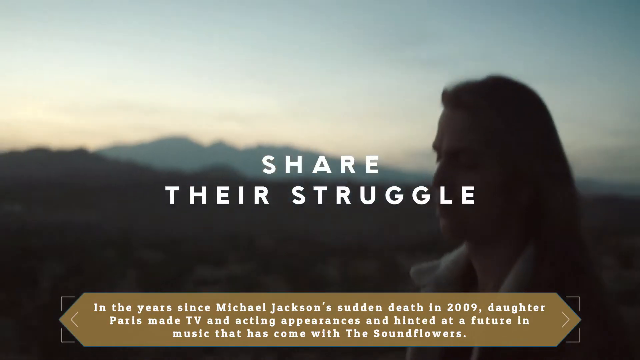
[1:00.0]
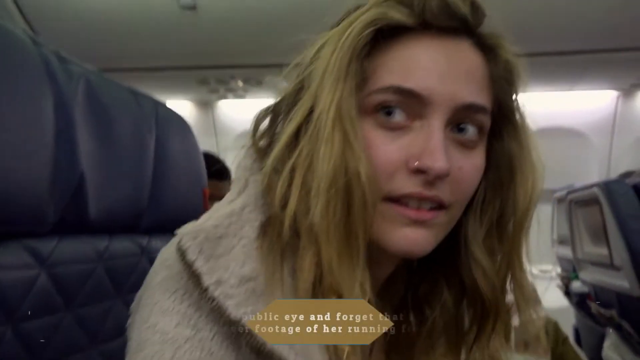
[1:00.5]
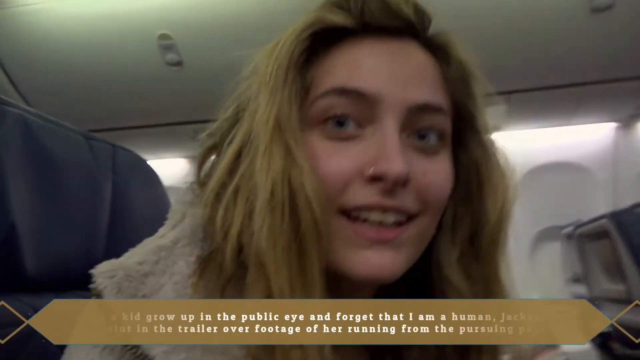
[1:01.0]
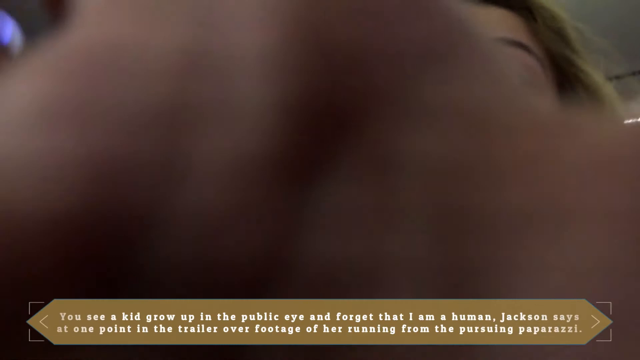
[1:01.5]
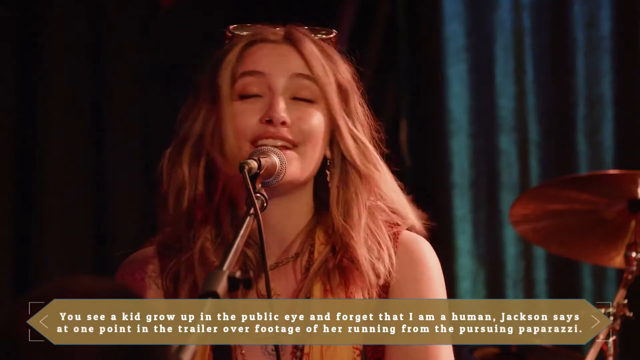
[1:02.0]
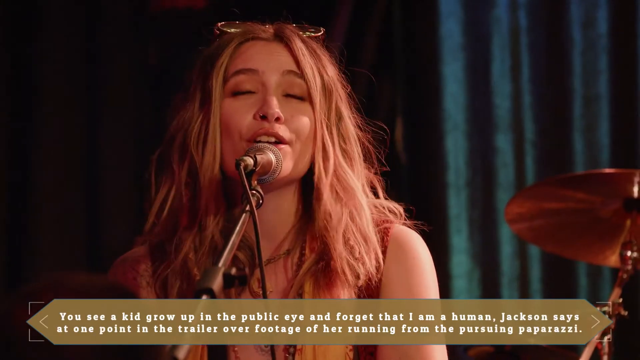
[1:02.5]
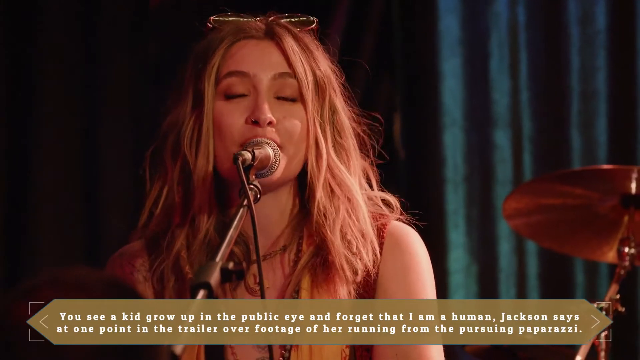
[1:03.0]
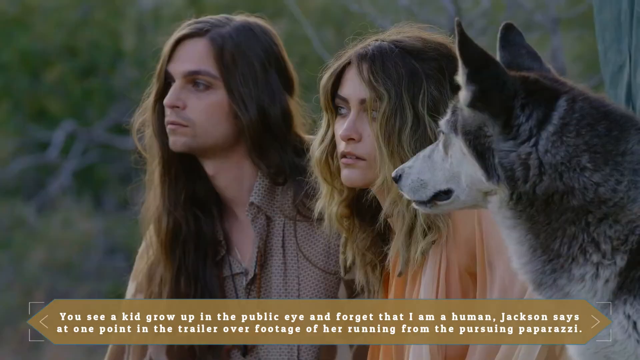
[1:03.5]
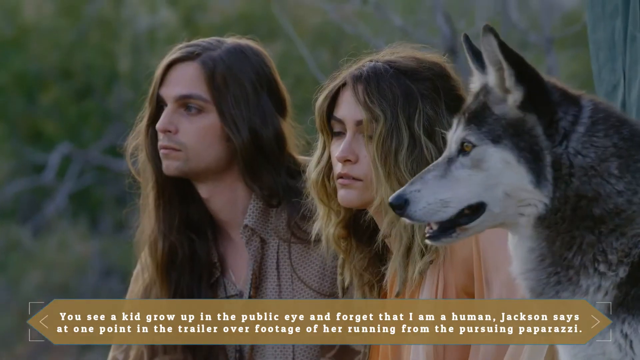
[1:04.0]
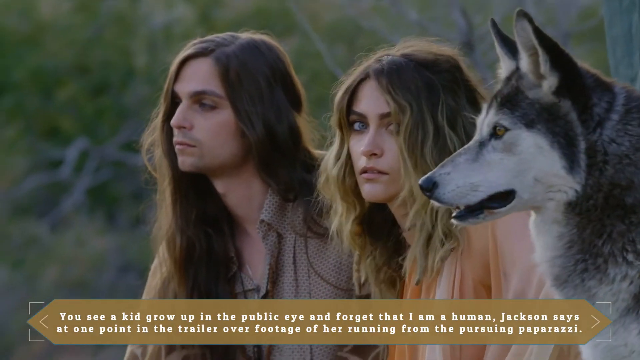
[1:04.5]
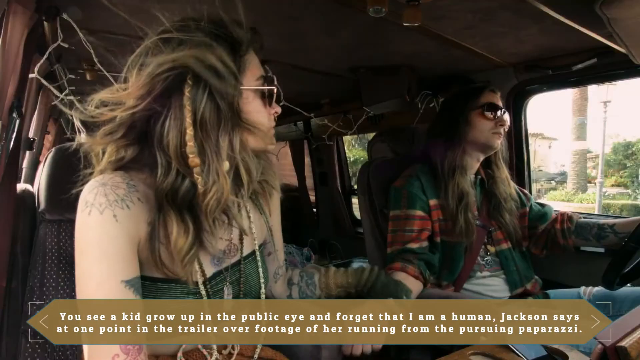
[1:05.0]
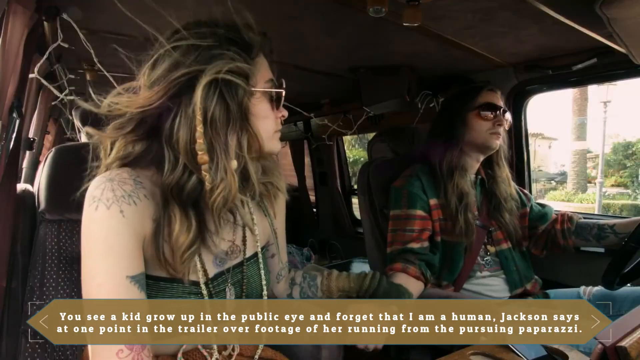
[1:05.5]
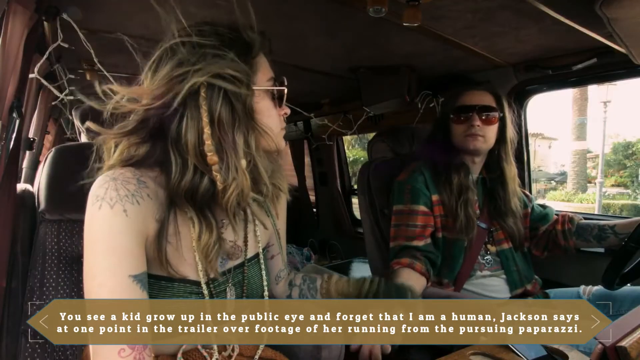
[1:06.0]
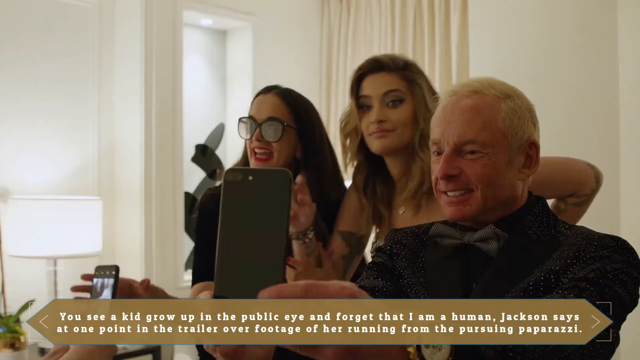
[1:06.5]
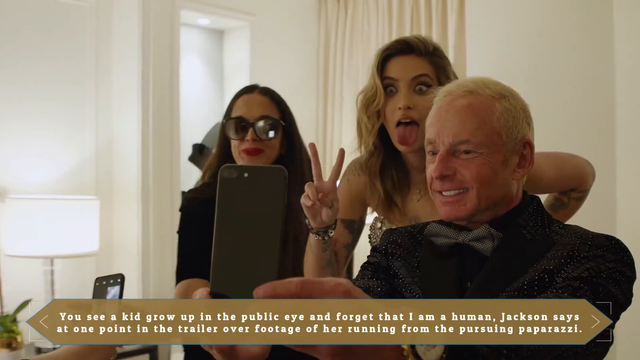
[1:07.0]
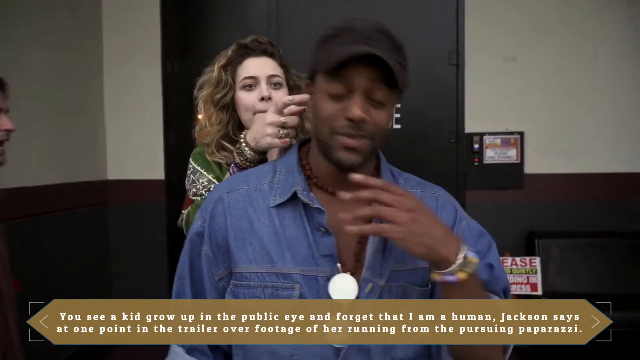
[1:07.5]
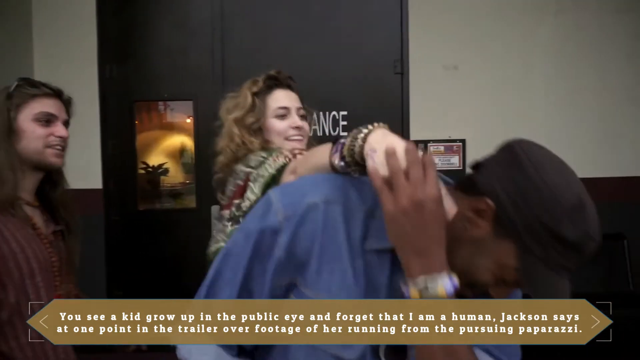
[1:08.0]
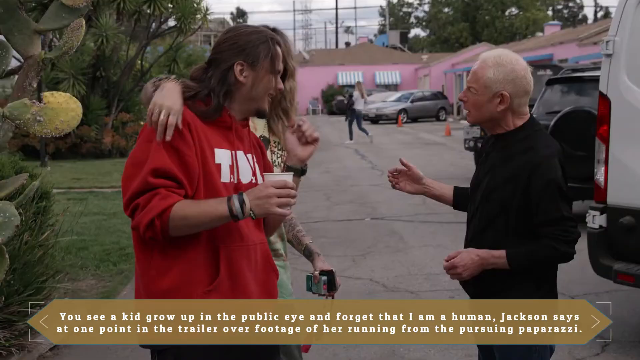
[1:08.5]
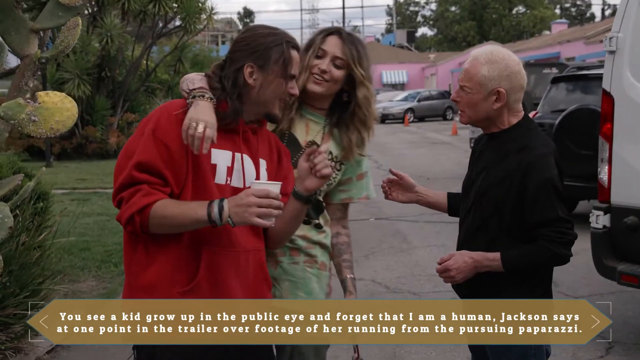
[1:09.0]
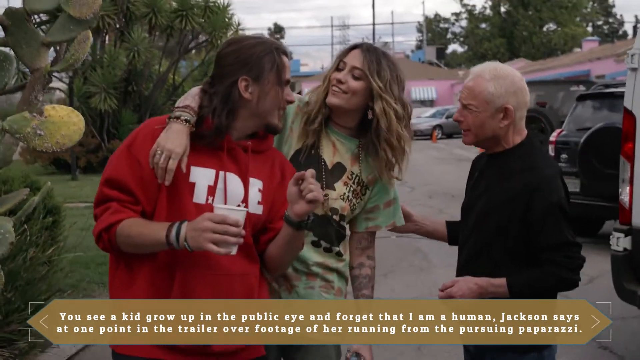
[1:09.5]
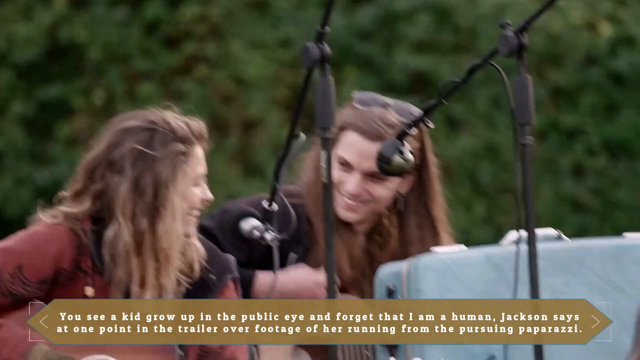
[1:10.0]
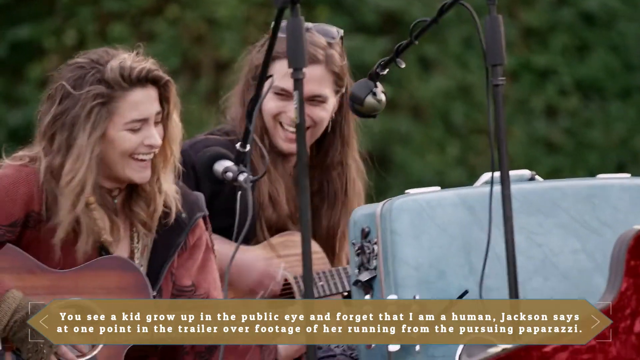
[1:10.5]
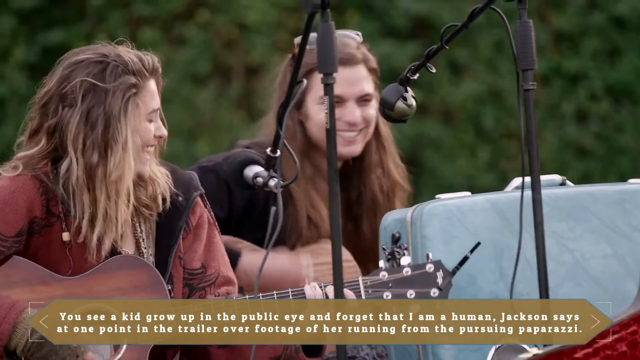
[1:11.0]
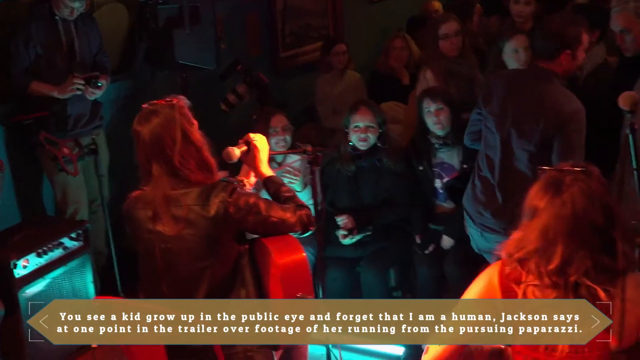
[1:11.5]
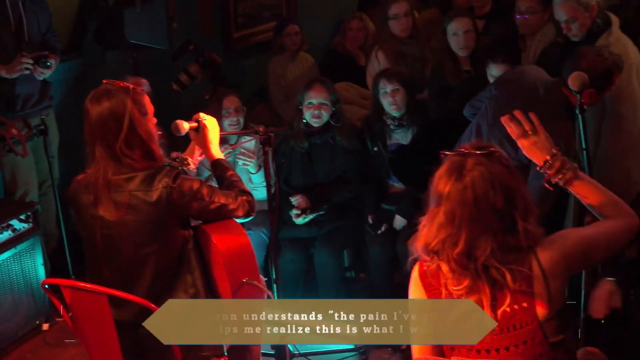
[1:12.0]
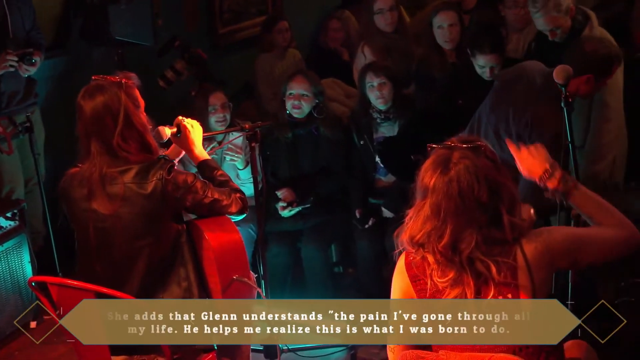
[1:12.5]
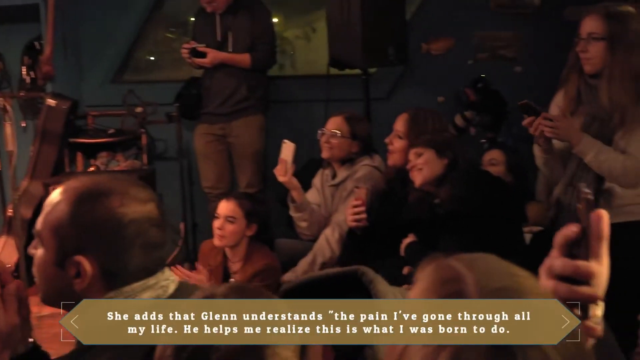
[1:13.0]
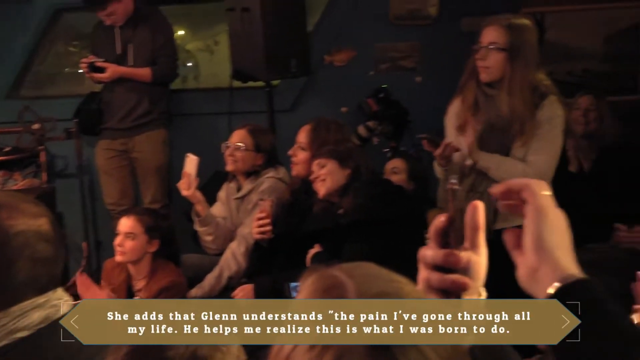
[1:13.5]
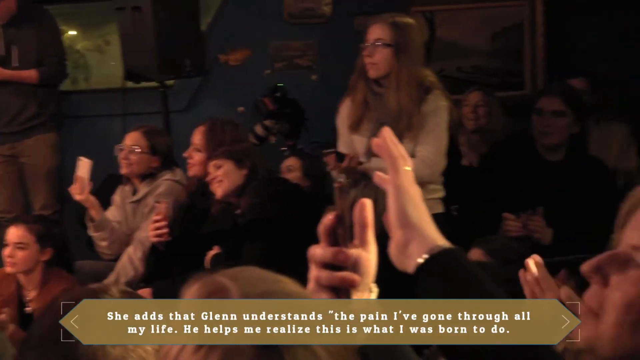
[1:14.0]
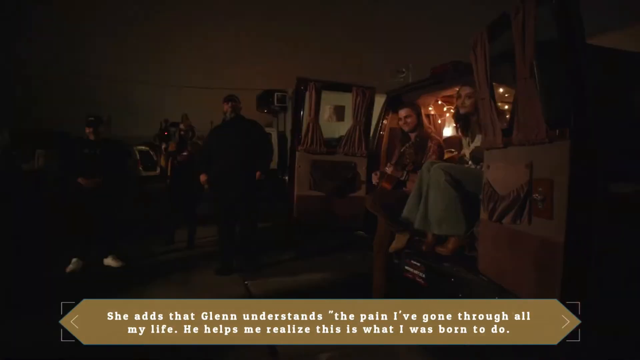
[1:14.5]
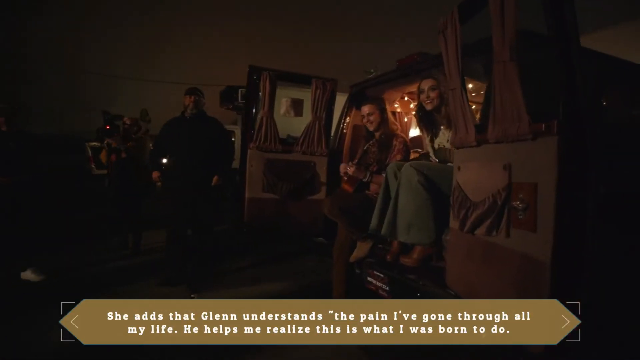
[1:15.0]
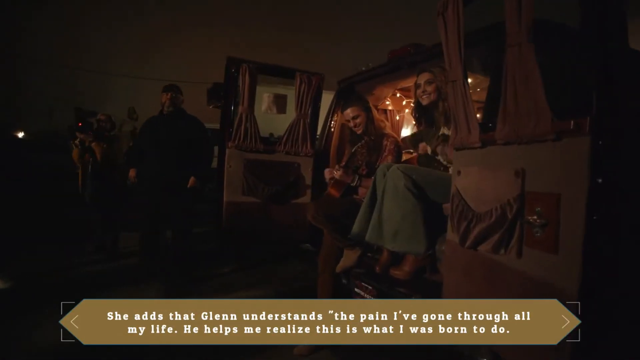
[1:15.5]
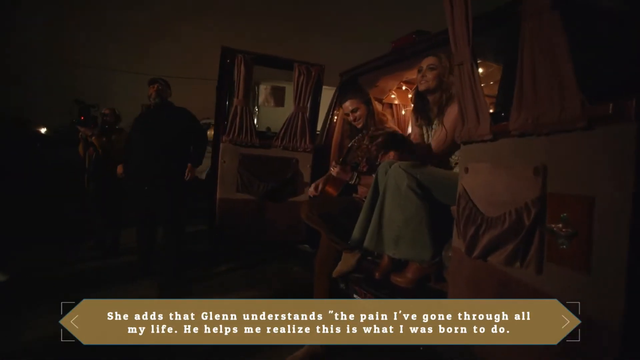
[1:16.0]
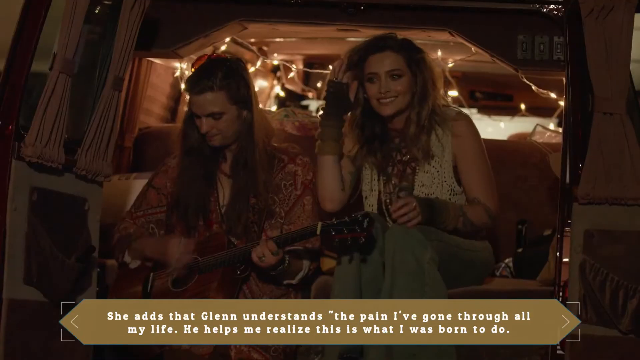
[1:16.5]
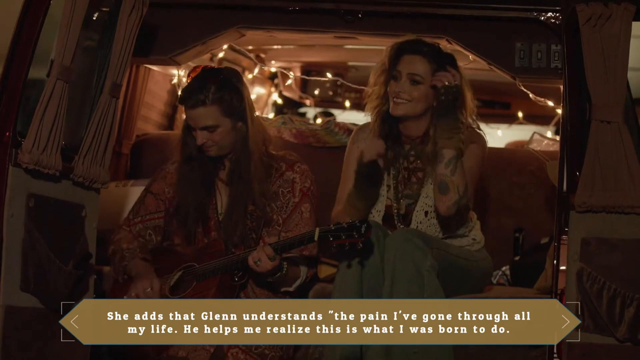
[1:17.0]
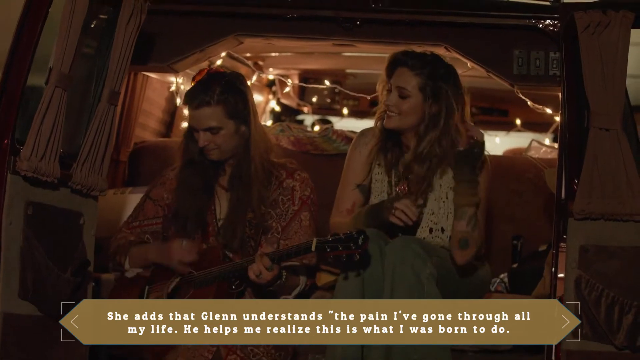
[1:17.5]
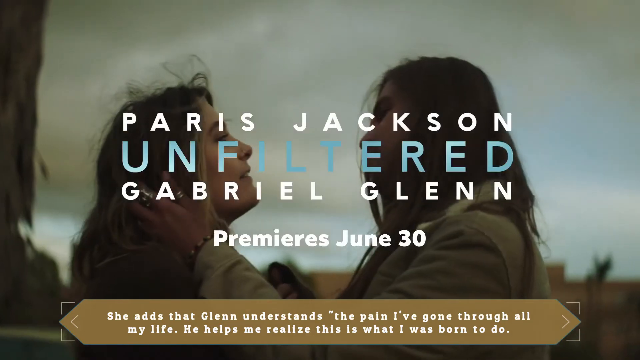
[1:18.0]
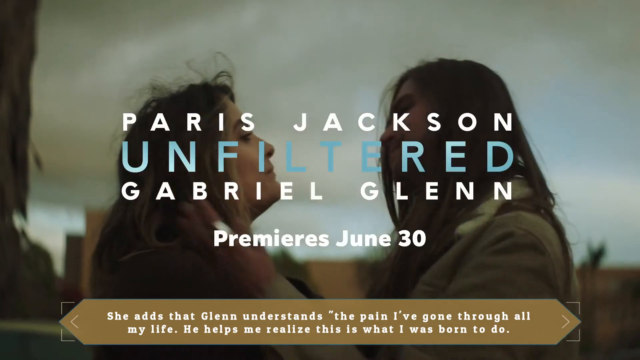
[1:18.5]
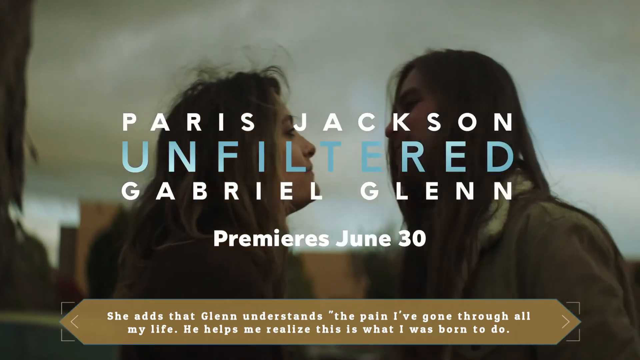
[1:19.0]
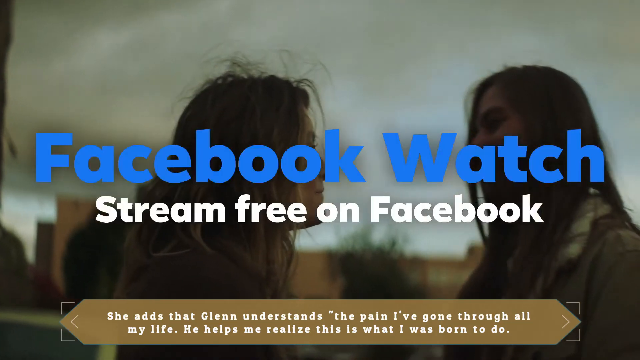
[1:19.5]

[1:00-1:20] Text reads "she had to struggle." At the bottom, text says "in the year since Michael Jackson's sudden death in 2009, daughter Paris made TV and acting appearances and hinted at a future in music." Text then reads "you see a kid grow up in the public eye and forget that I am human, Jackson says at one point in a trailer over footage of her running from the pursuing paparazzi." She smiles on stage, and she says Glenn "understands the pain that I've gone through all my life. He helps me realize this is what I was born to do." A photo shoot shows her with a wolf at her side, and him as well. The two then play on stage, smiling and laughing, and she looks happy.